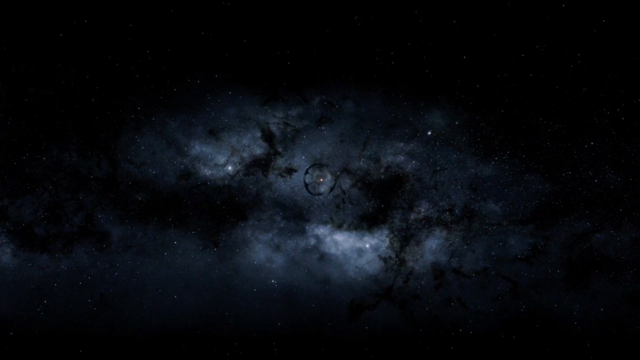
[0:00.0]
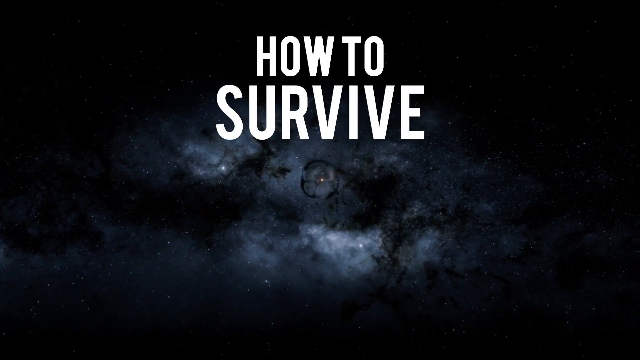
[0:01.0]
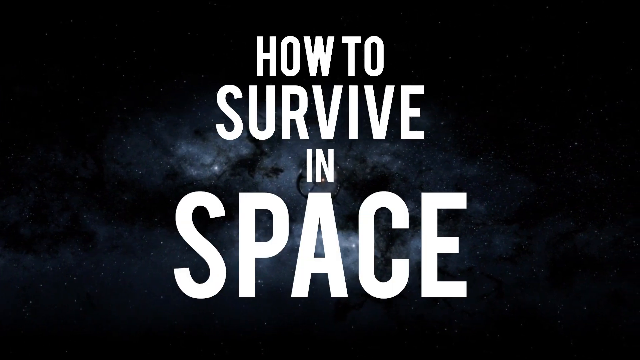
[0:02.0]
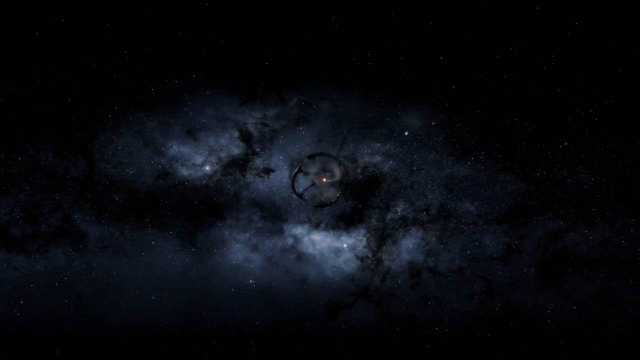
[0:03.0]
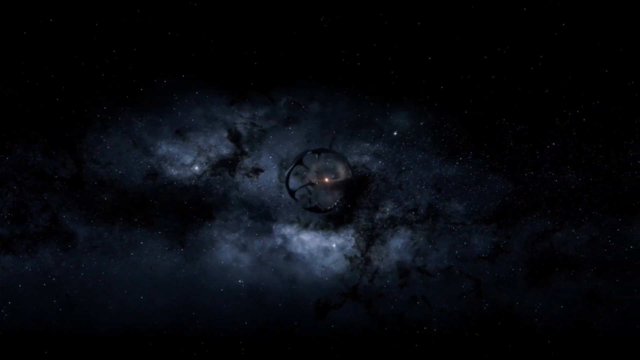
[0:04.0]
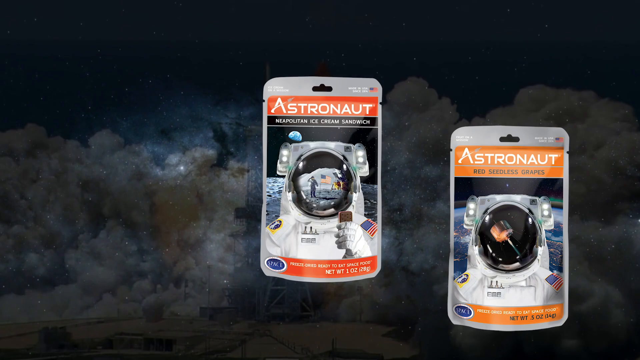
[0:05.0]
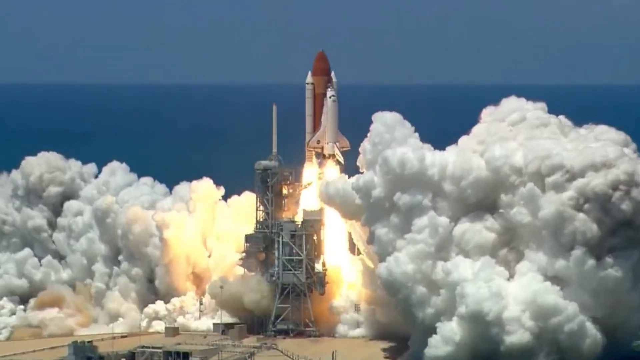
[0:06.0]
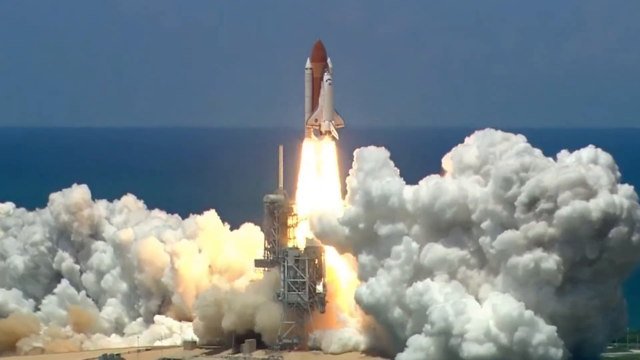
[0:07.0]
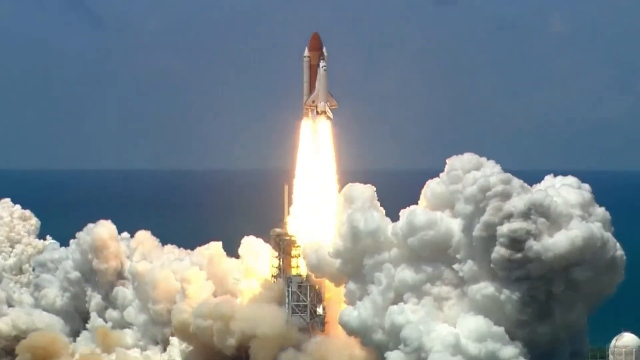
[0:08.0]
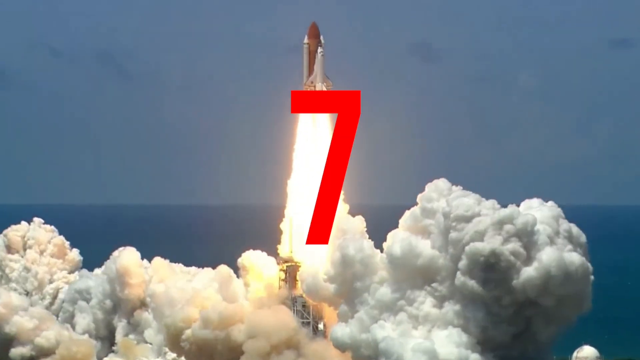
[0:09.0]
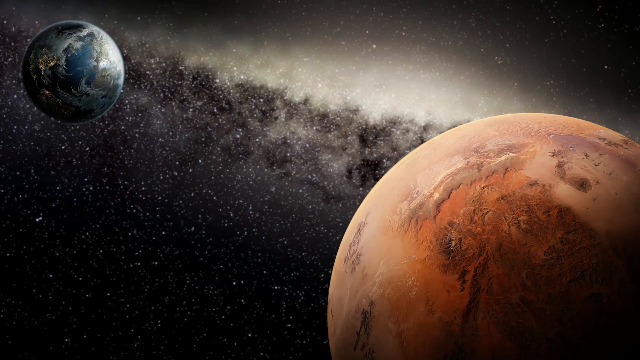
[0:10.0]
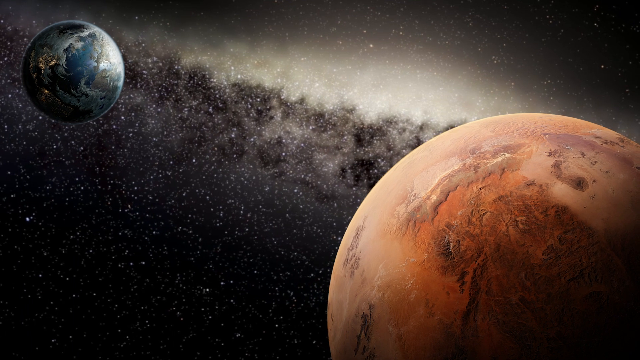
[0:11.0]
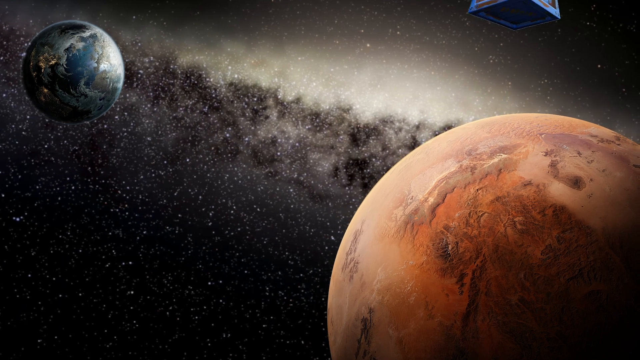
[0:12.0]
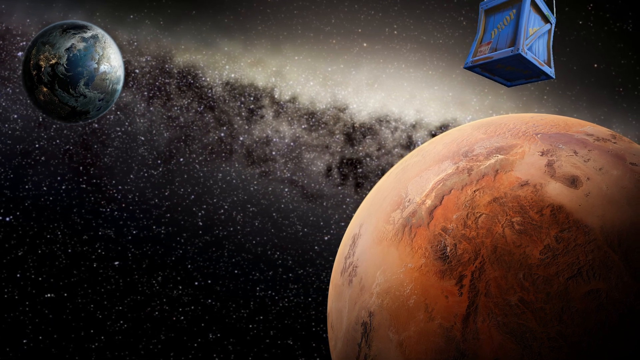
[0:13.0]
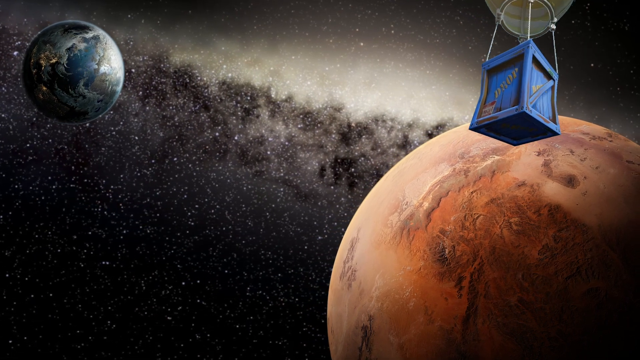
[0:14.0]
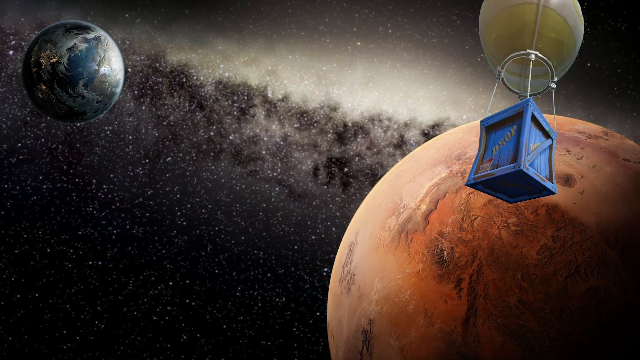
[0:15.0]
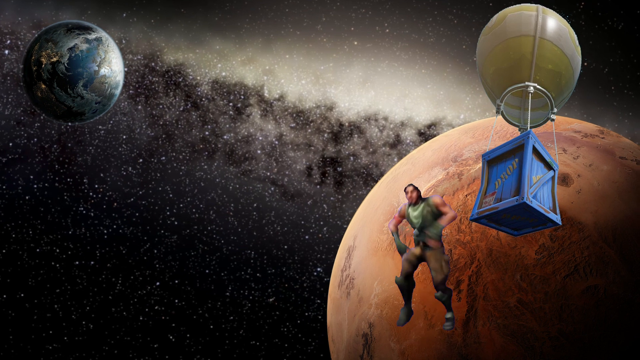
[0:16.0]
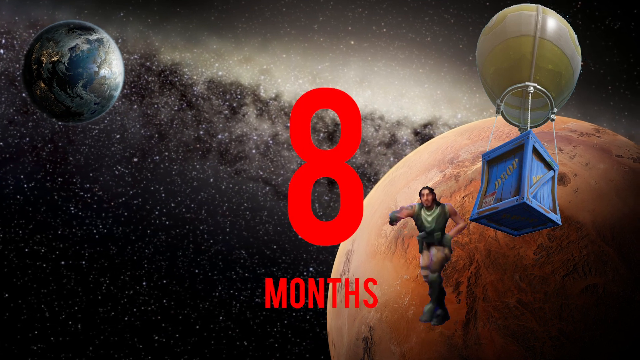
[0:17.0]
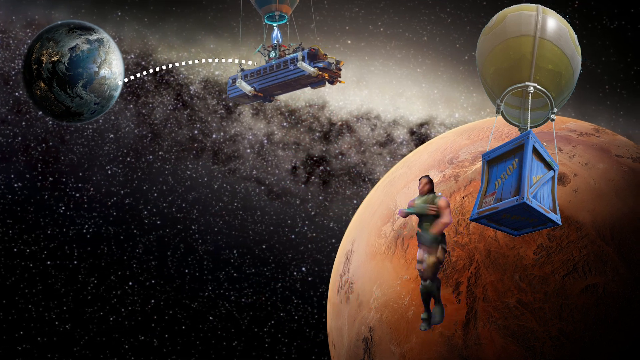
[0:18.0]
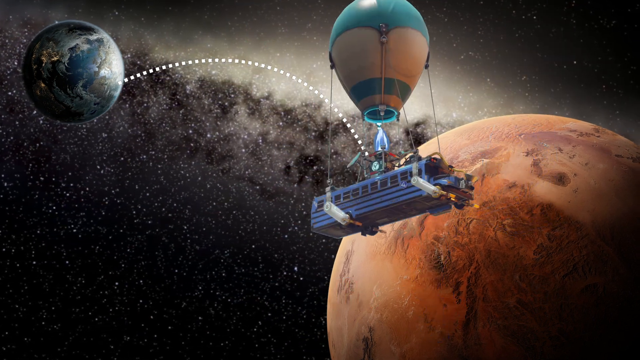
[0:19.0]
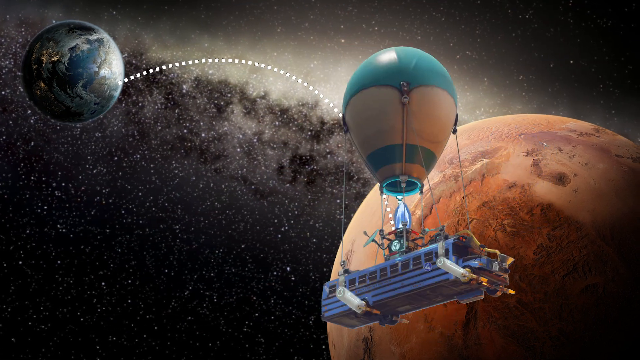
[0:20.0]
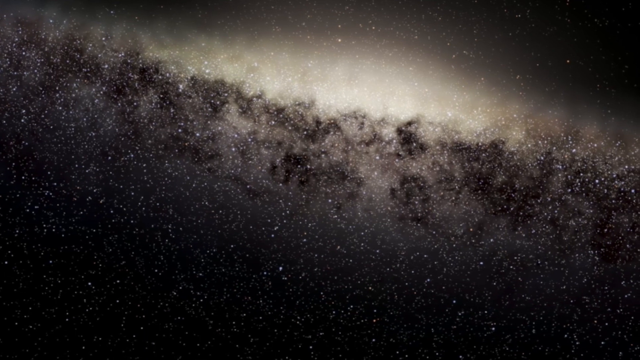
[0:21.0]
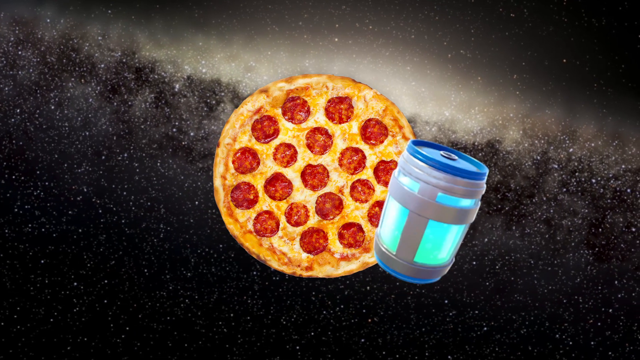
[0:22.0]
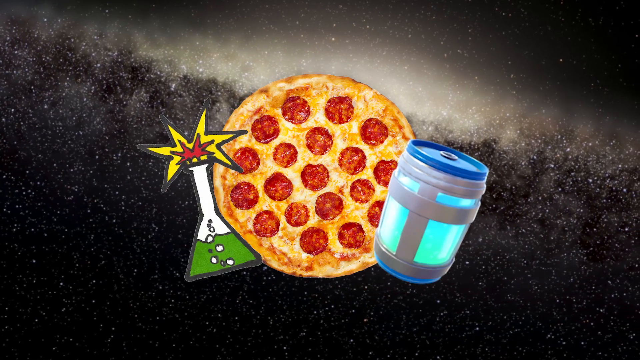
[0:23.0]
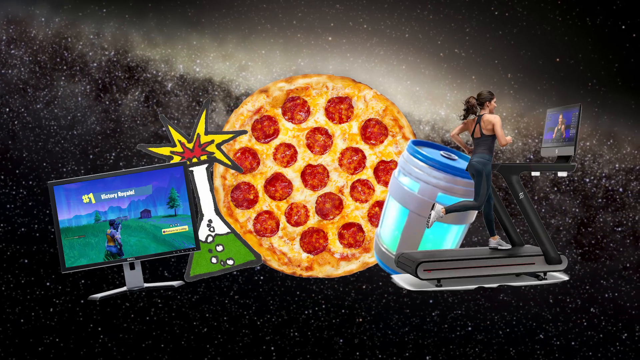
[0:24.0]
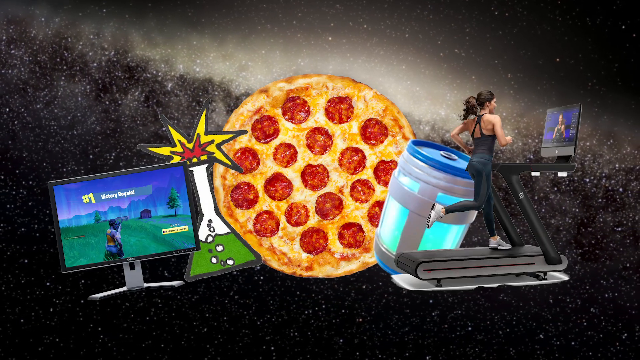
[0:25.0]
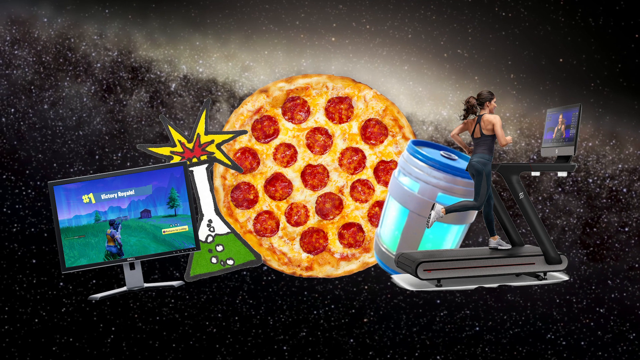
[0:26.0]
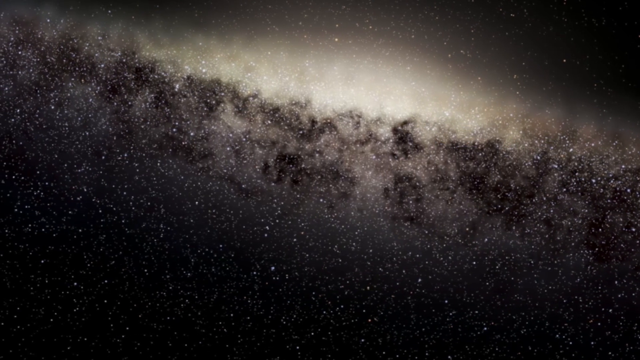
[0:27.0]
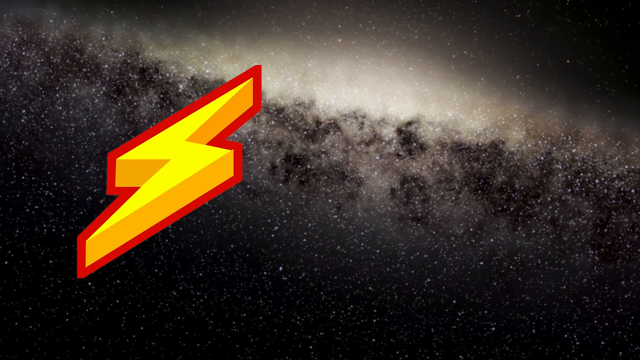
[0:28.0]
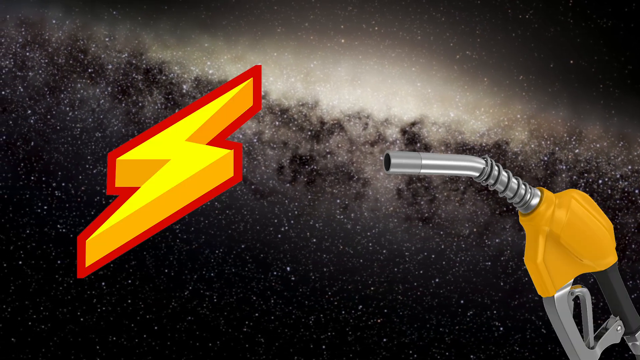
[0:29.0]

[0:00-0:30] A picture of outer space appears, and the words "how to survive in space" appear in the center while something circular spins in the middle. Three astronaut pictures appear and quickly disappear. A rocket launches, with a lot of smoke on the ground, and blasts off upward. The number 7 appears in the middle with the text "7 months" as the rocket keeps going upward. In the bottom right corner is what looks like either the Moon or Mars, and the planet Earth appears in the top left corner. A blue box attached to a balloon comes down onto the planet on the right side, and "8 months" appears in the middle. There is another balloon on the left side, and something comes from Earth: a school bus attached to a balloon floats toward the planet on the right. The view becomes an empty space of stars. A pizza appears in the middle, a canned drink on the right side, and a chemical vase with some green liquid in it on the left side. An image of a woman running on a treadmill appears to the right, and a TV with a video game displayed on its screen appears on the left. All of these images disappear, and a yellow thunderbolt appears on the left side with a gasoline pump on the right side.